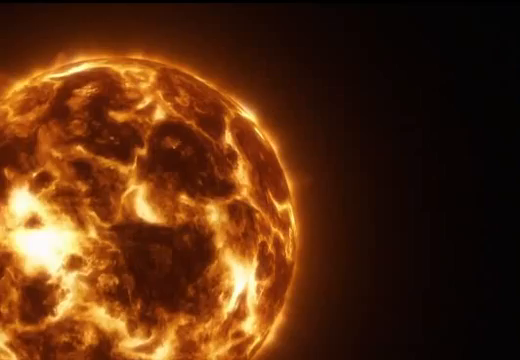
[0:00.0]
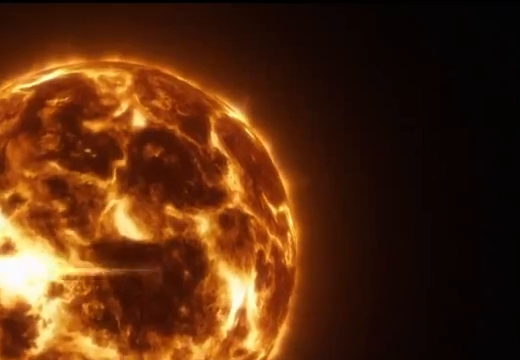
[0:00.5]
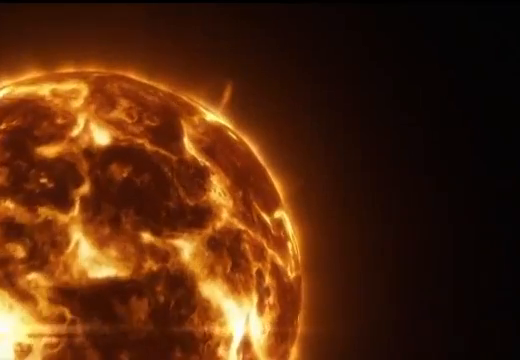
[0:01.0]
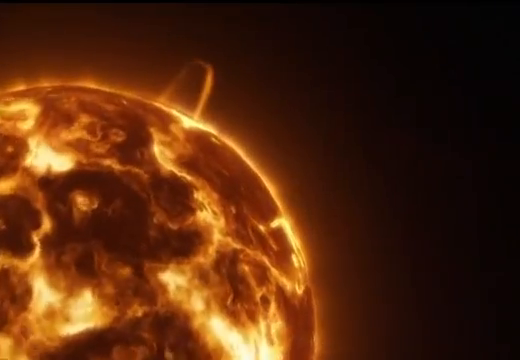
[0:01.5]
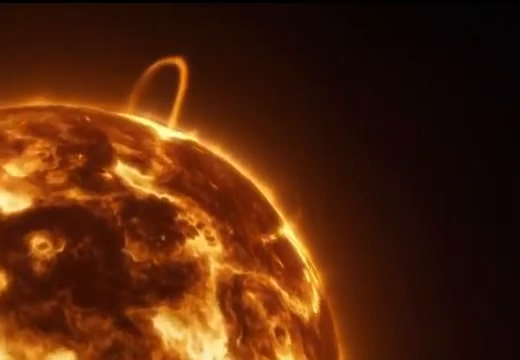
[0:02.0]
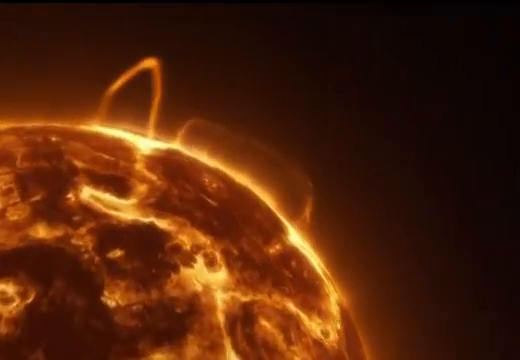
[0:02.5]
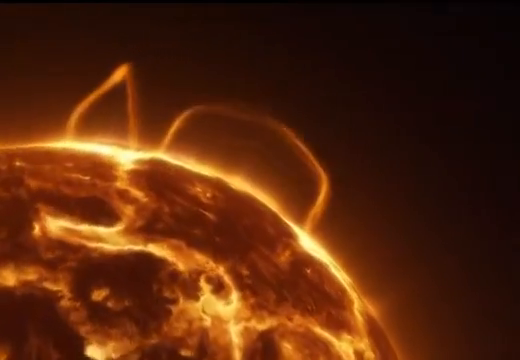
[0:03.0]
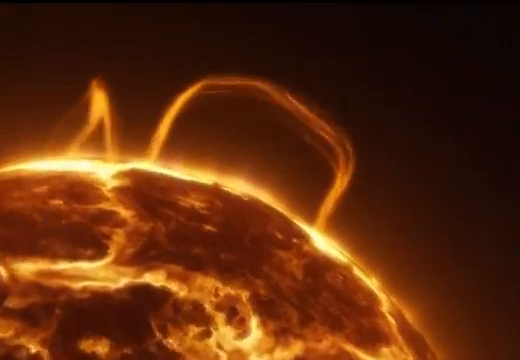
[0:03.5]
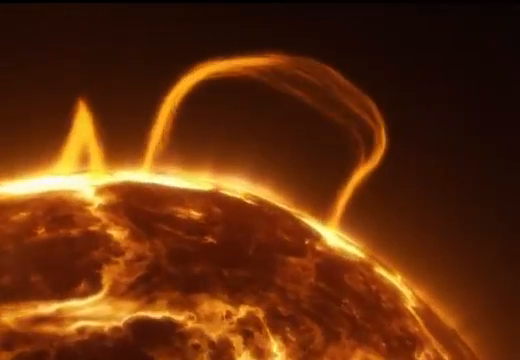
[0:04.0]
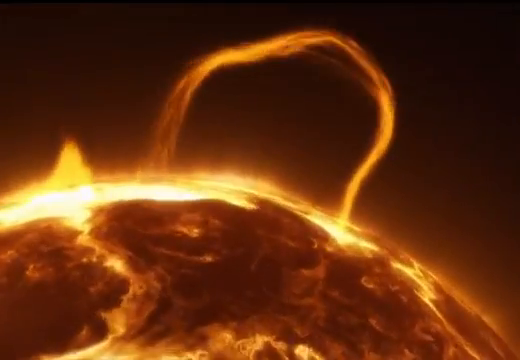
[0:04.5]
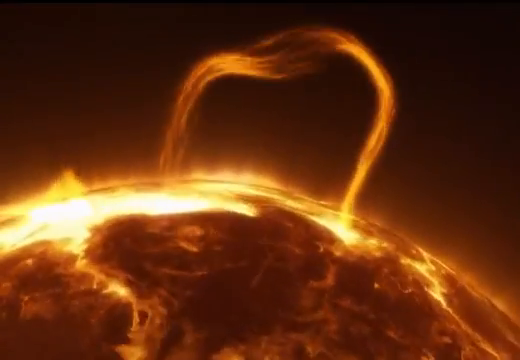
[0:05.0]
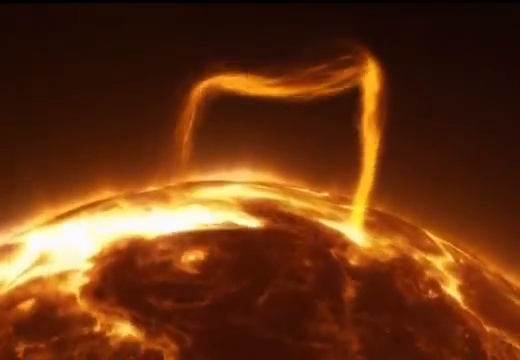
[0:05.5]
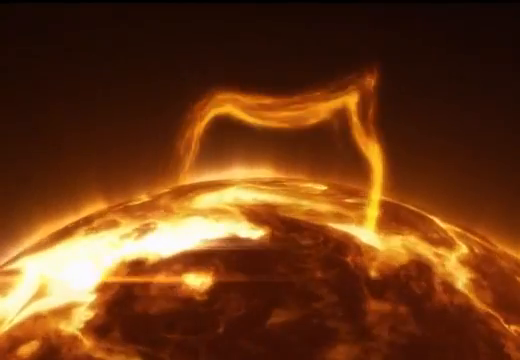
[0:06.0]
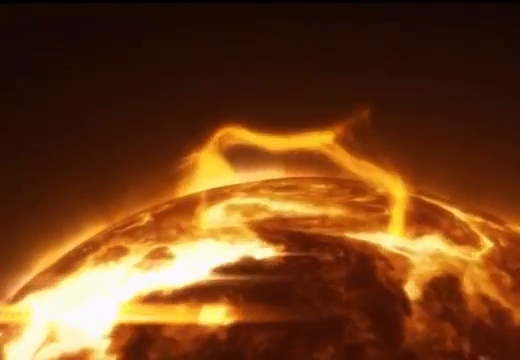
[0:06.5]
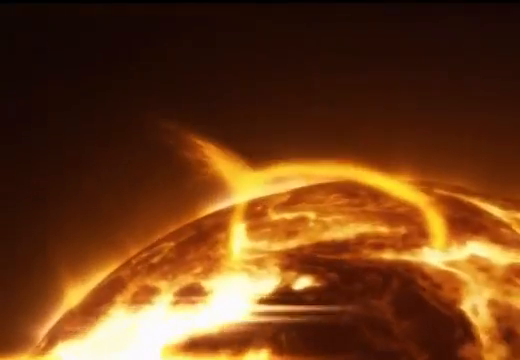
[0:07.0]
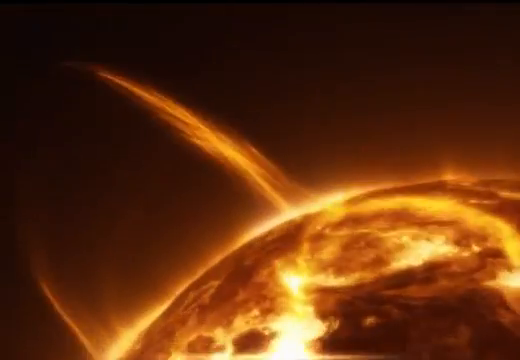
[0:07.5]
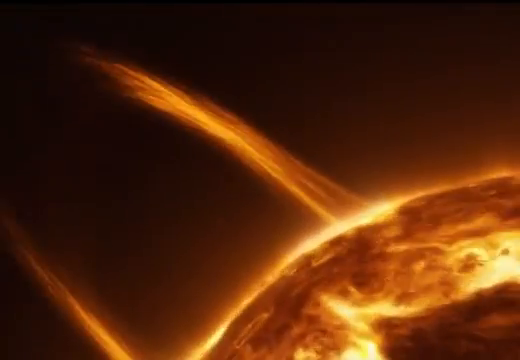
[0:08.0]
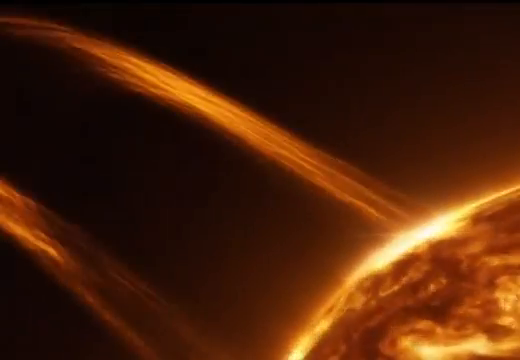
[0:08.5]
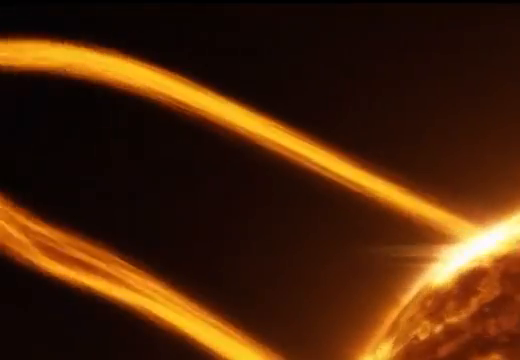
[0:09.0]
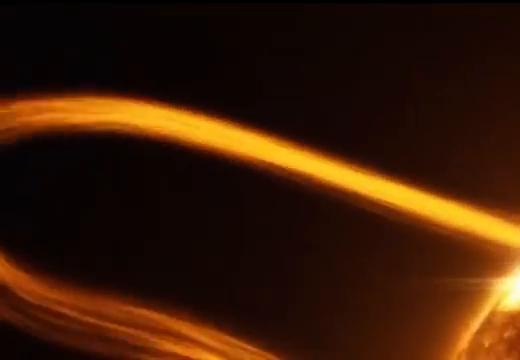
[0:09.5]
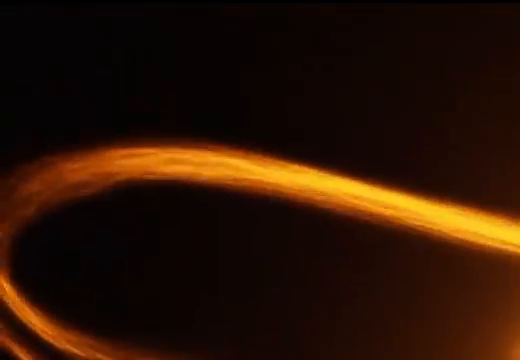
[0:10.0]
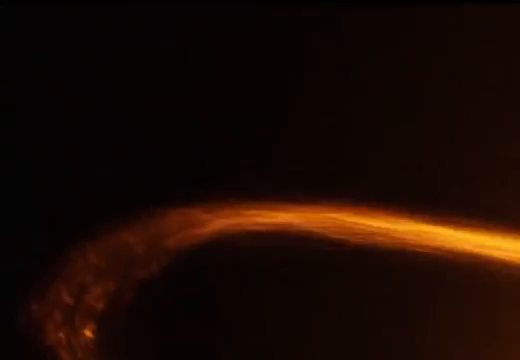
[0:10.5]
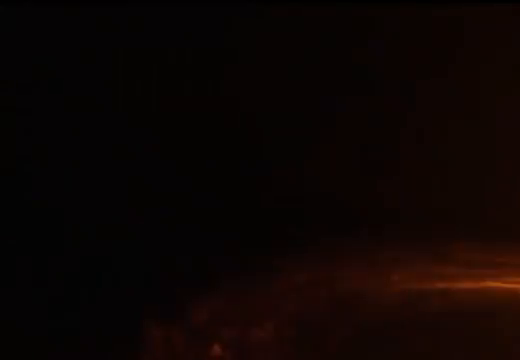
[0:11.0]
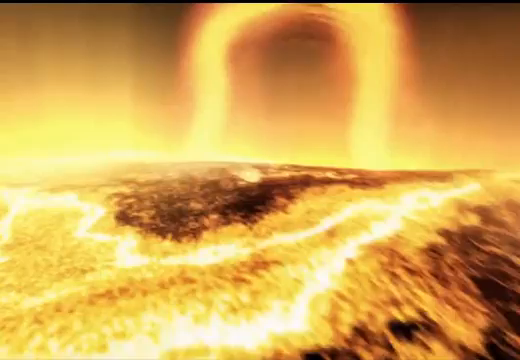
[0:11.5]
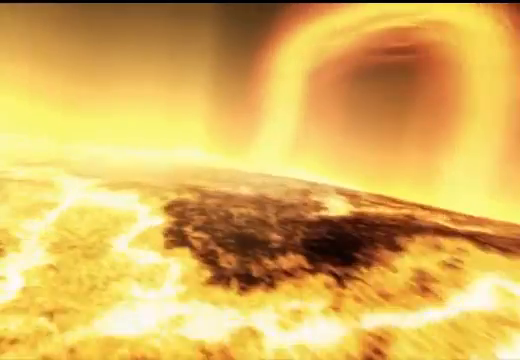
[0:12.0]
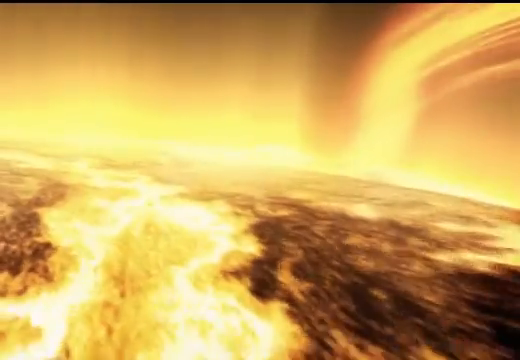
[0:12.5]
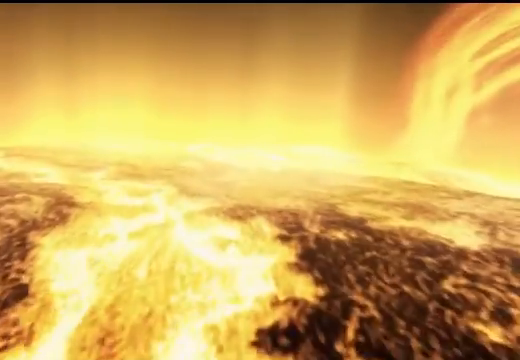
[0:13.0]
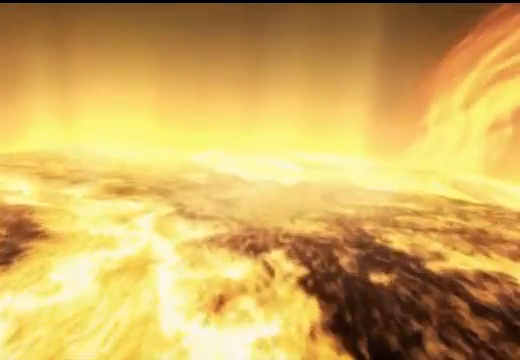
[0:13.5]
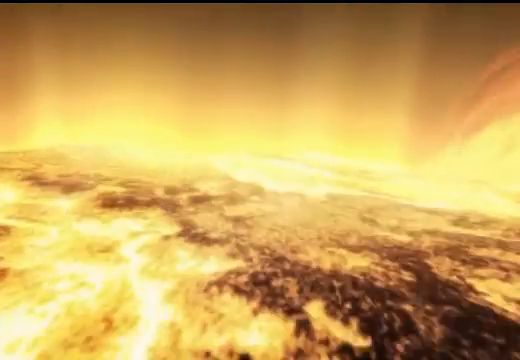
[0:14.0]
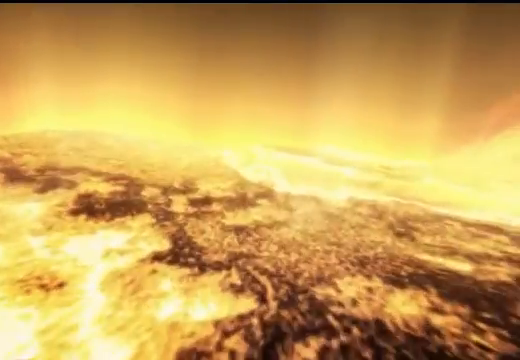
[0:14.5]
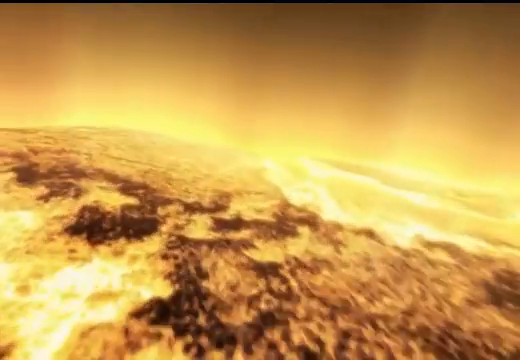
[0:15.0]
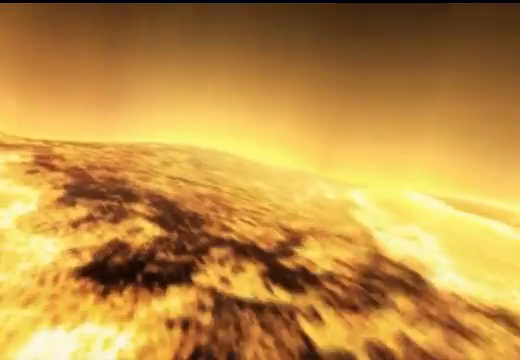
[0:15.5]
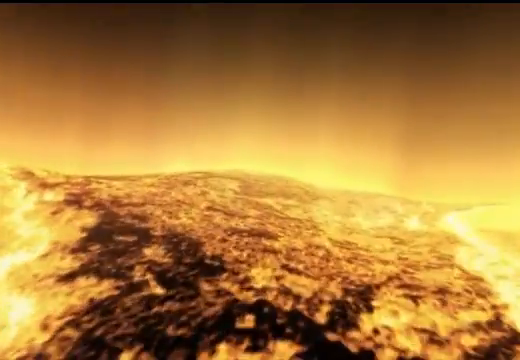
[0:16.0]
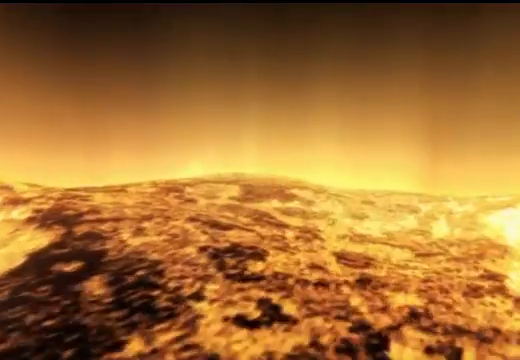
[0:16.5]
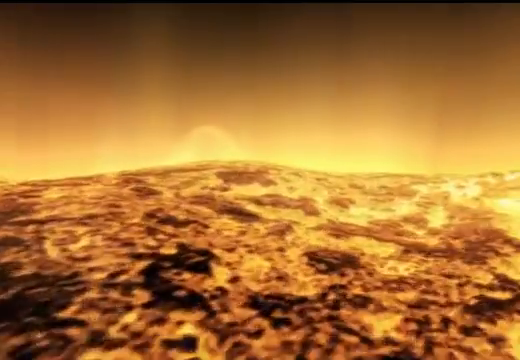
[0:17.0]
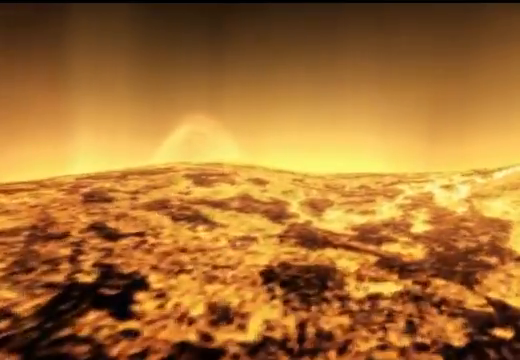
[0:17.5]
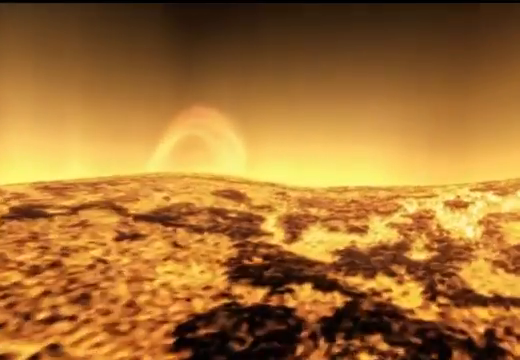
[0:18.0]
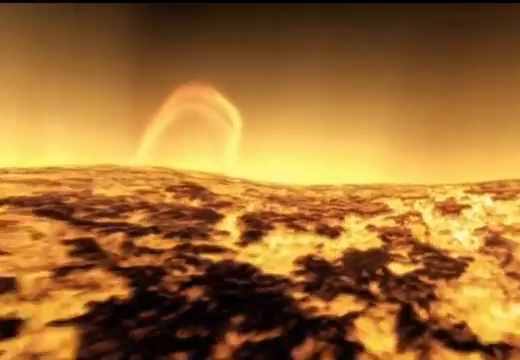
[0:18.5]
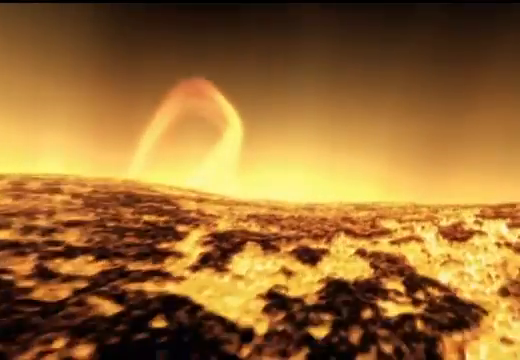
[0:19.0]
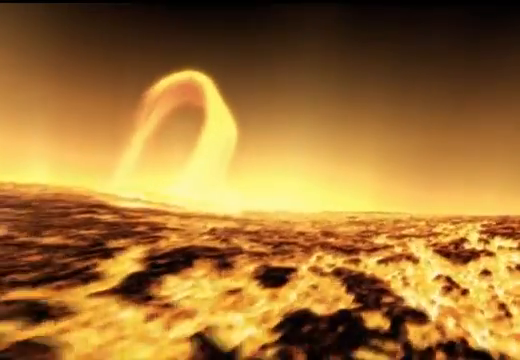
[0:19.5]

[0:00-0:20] An animation, apparently depicting the sun, opens the video. The view zooms in on the round object, which is mainly yellow, with several yellow flares coming out of it. The view pans closer, continuing to show the yellow flares against a completely black background. The video is entirely computer-generated and rectangular in shape, and no humans or animals are visible. As the view zooms in towards the round shape, apparently the sun, the object continues to move from the inside; it is round and in different shades of yellow and orange.